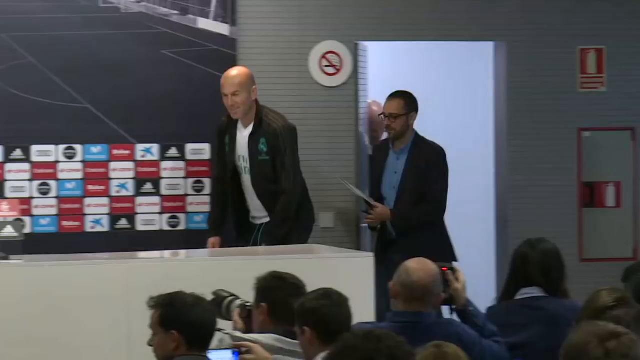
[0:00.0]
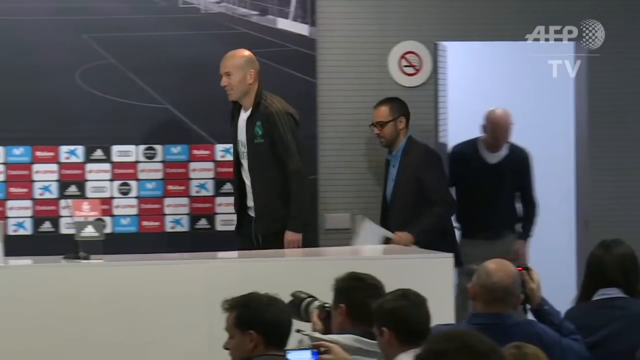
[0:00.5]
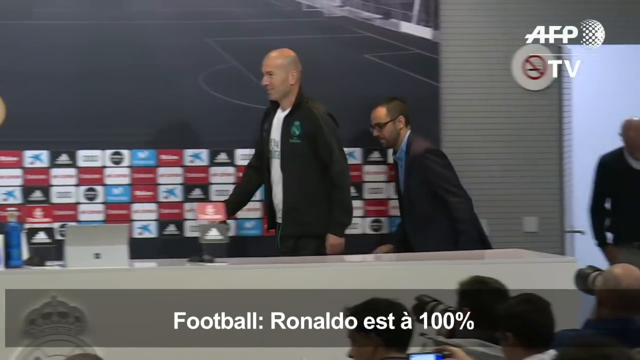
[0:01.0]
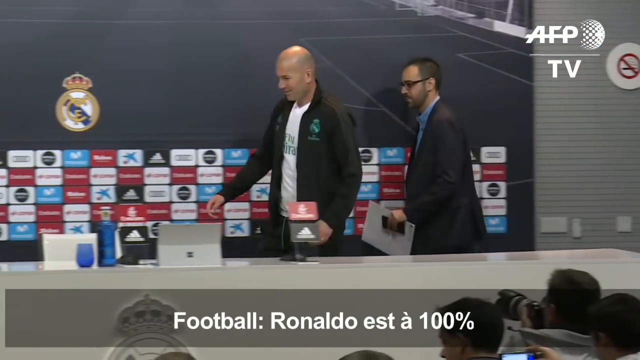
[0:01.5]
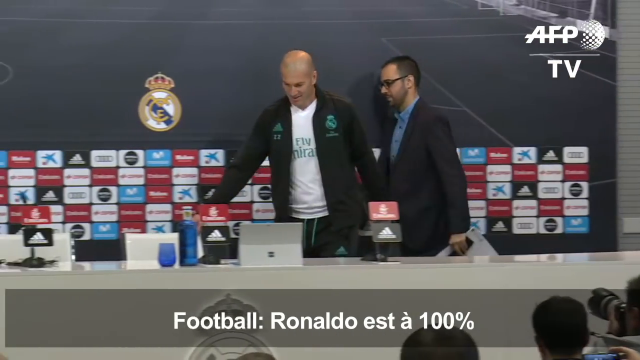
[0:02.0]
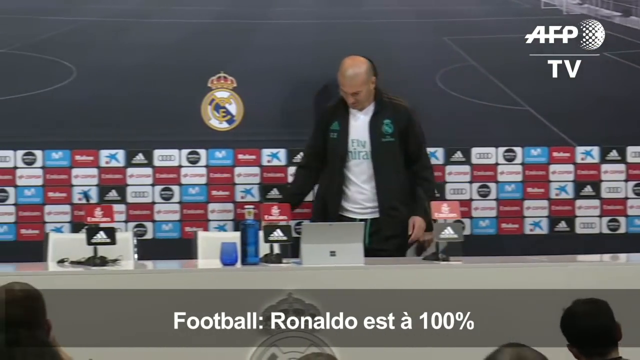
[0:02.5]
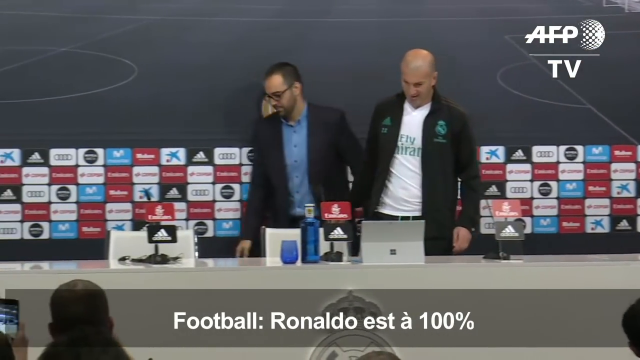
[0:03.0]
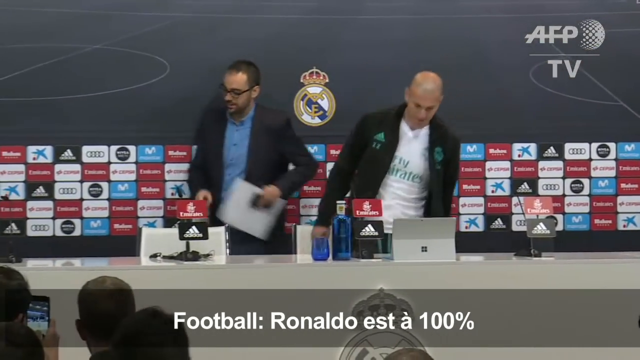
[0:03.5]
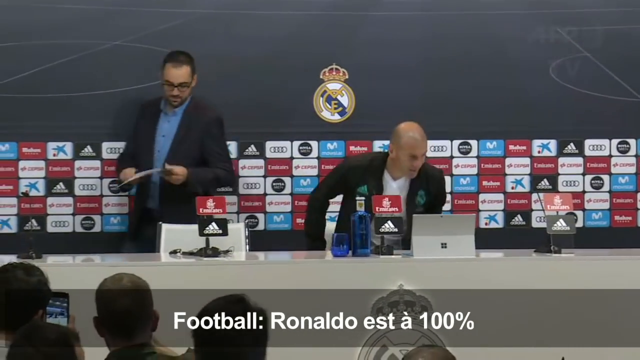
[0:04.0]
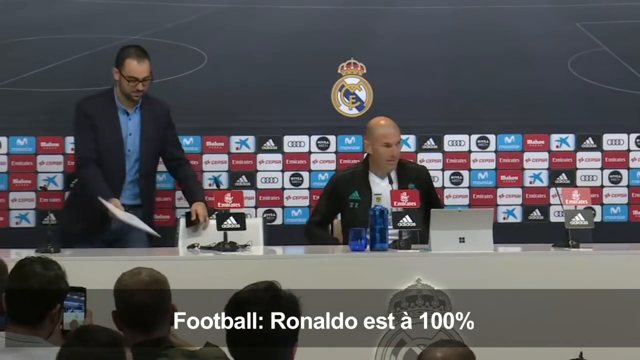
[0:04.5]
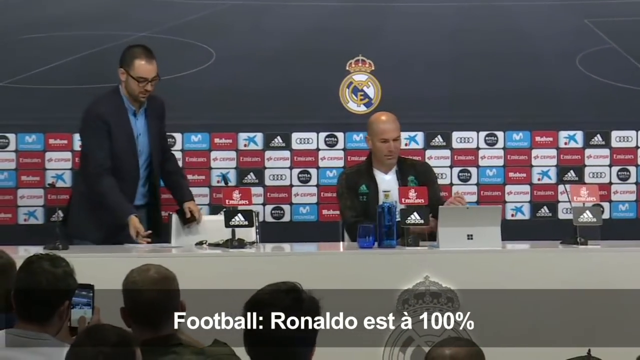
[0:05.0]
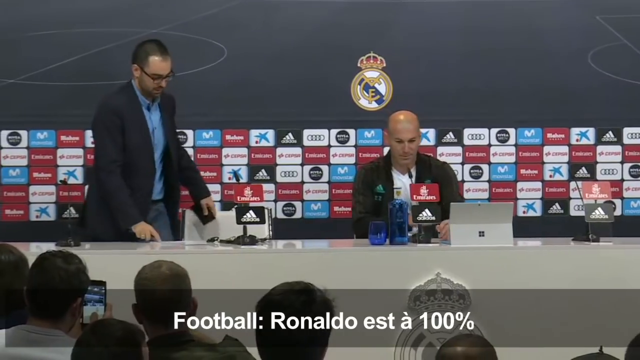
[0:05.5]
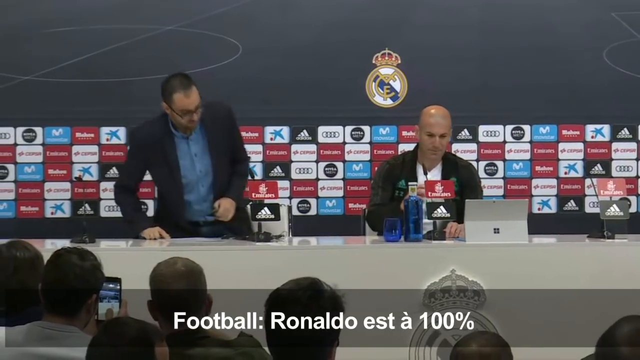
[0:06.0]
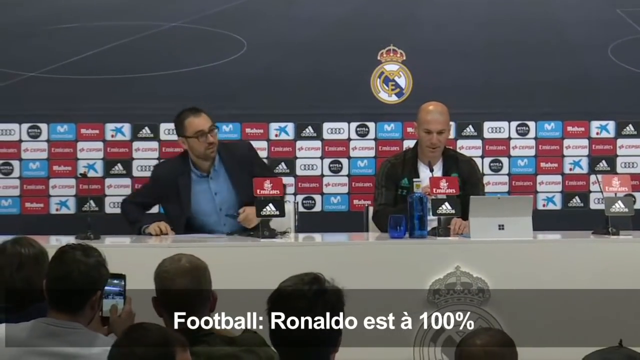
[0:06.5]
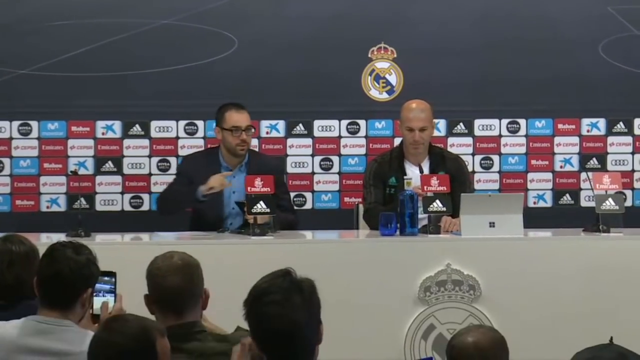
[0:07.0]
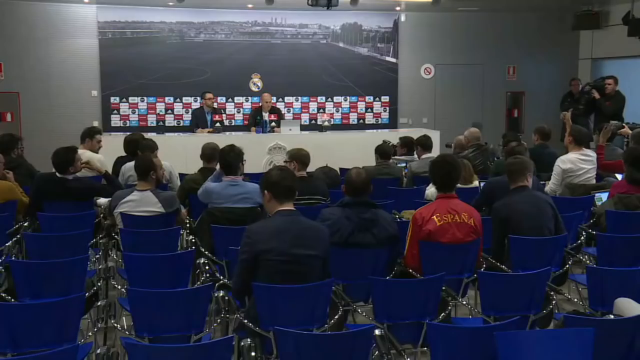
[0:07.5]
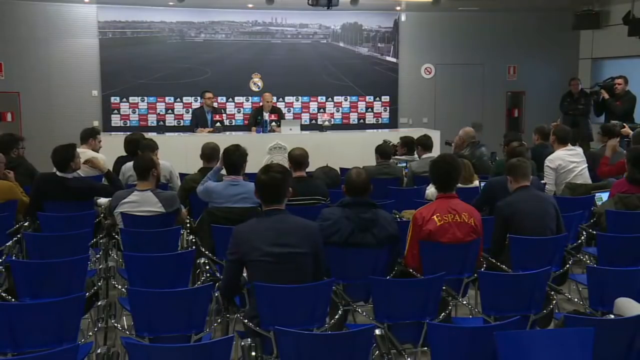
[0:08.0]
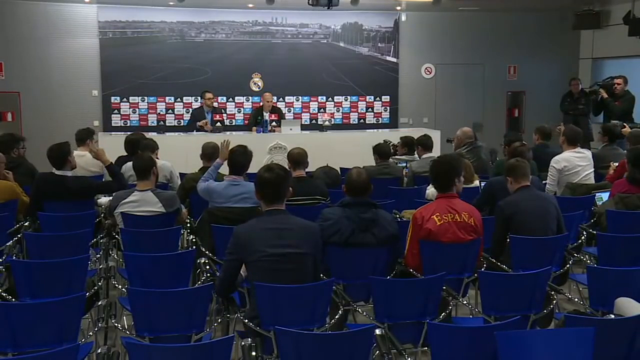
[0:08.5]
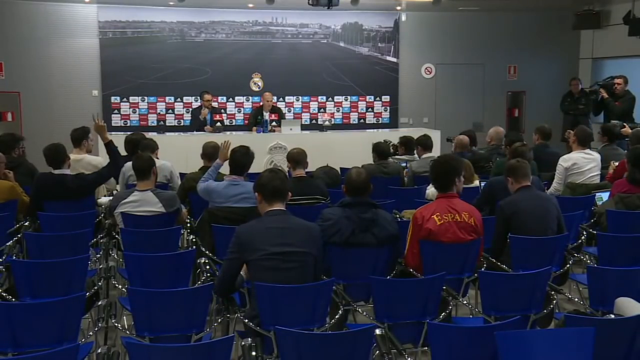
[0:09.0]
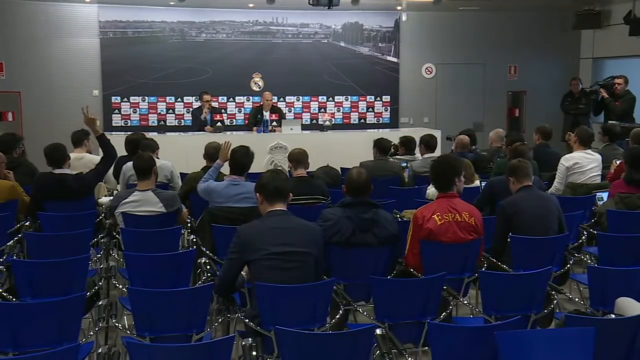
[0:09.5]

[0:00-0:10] People come into a press conference. Two men sit down in front of the reporters, probably about 30 of whom are gathered to ask questions. The man on the left has dark hair and glasses and wears a black coat over a blue shirt; he is probably in his early 40s. The other man is balding, in his mid to late 40s, and wears a black jacket and a white T-shirt.